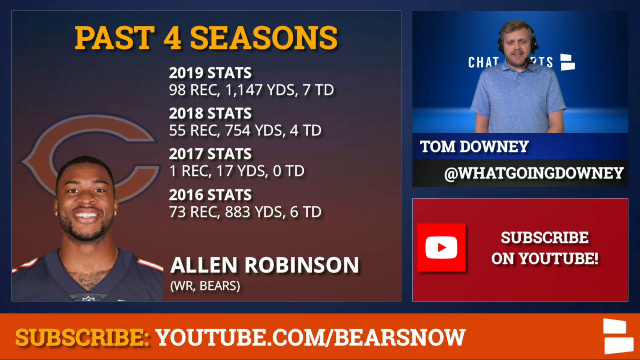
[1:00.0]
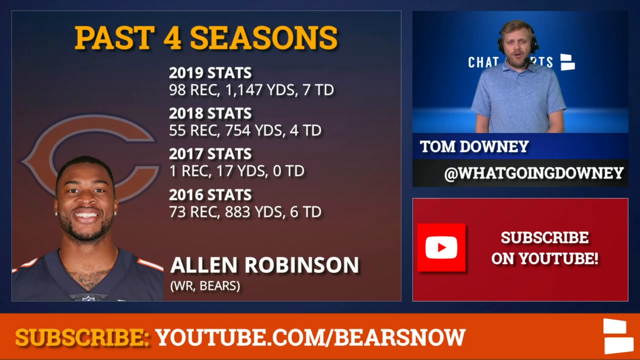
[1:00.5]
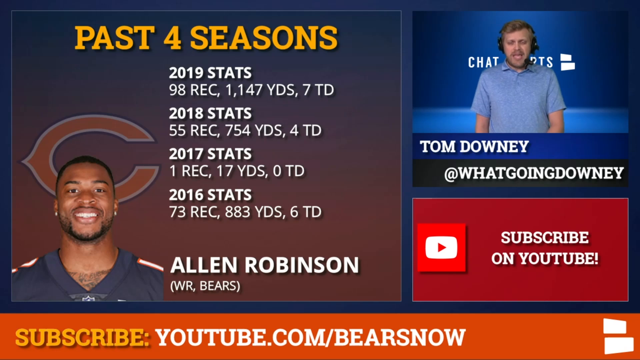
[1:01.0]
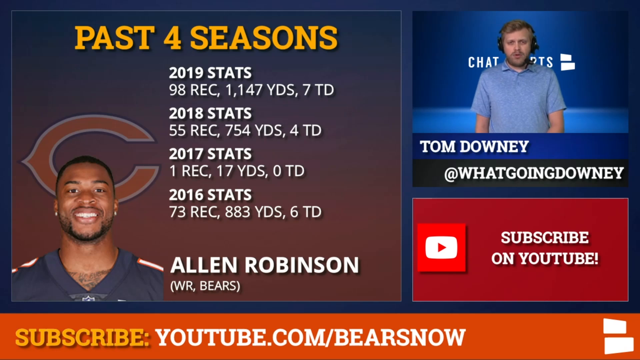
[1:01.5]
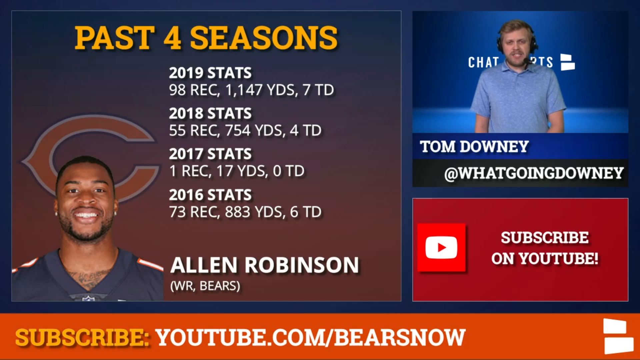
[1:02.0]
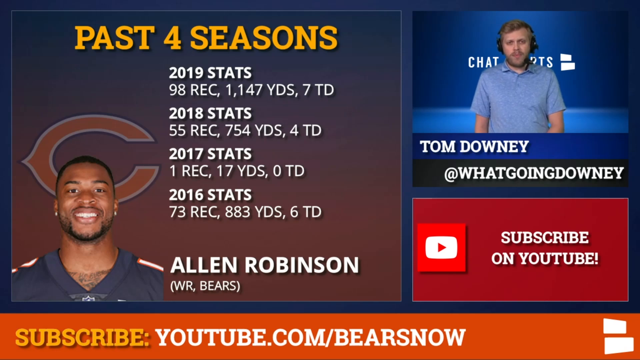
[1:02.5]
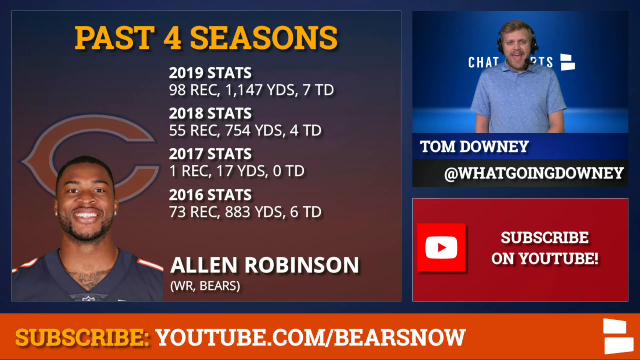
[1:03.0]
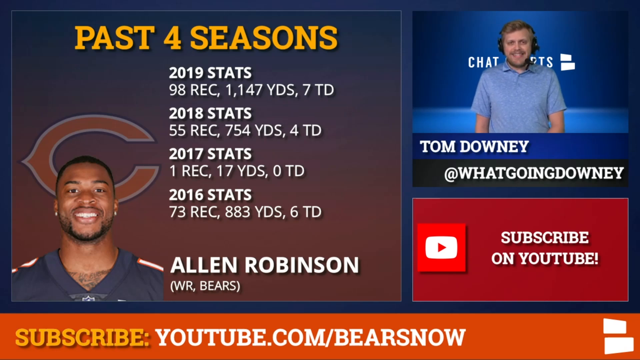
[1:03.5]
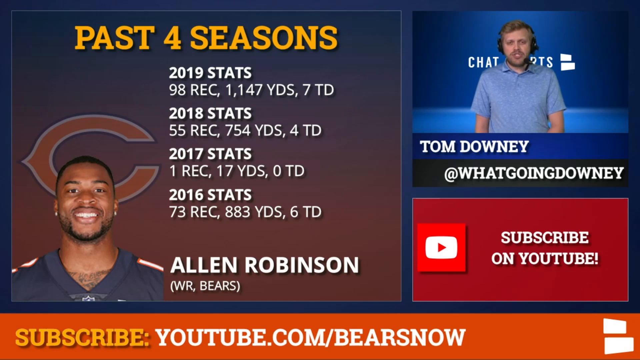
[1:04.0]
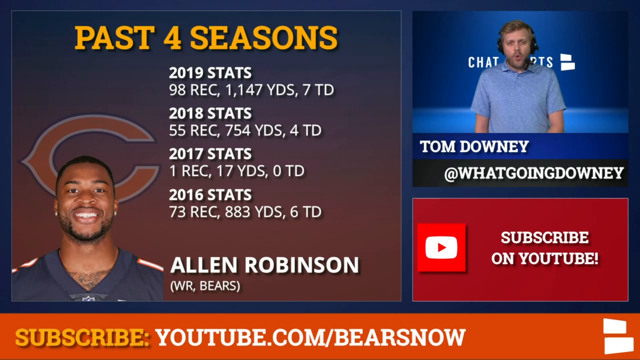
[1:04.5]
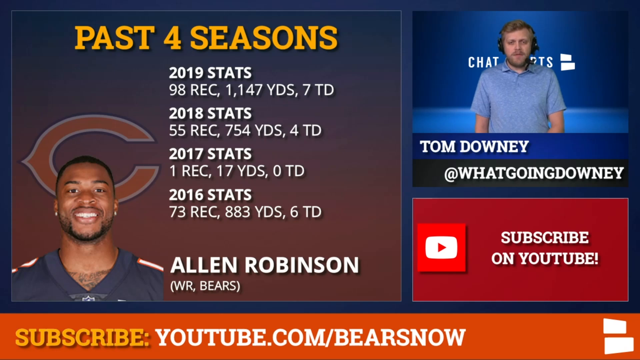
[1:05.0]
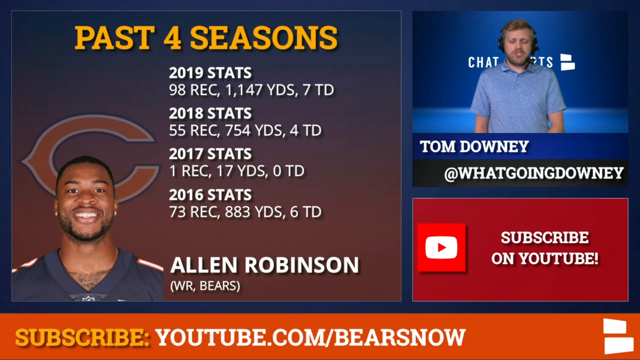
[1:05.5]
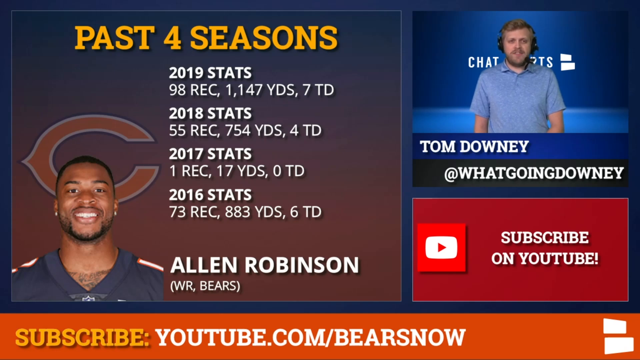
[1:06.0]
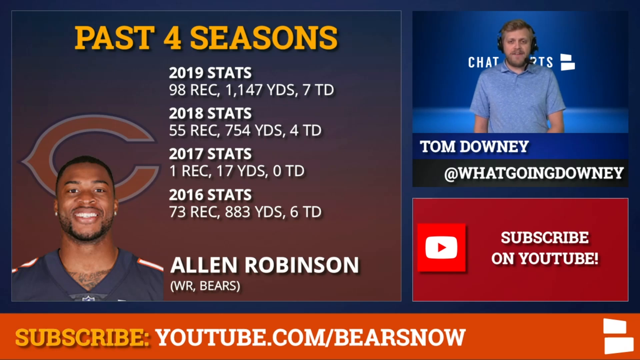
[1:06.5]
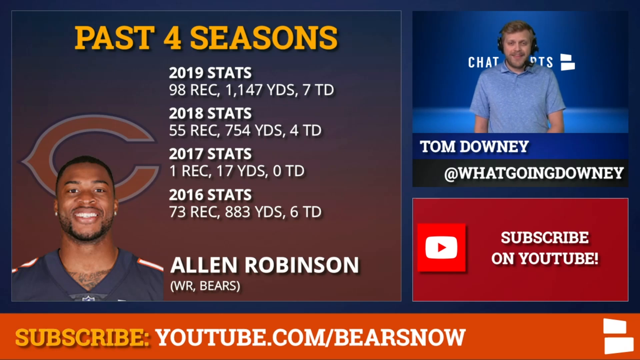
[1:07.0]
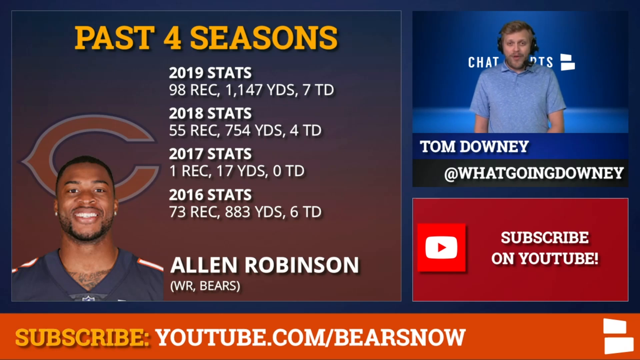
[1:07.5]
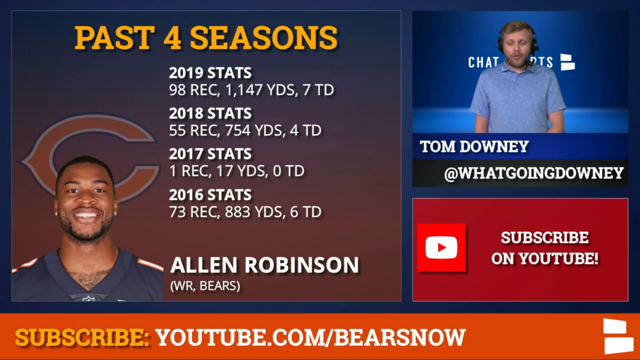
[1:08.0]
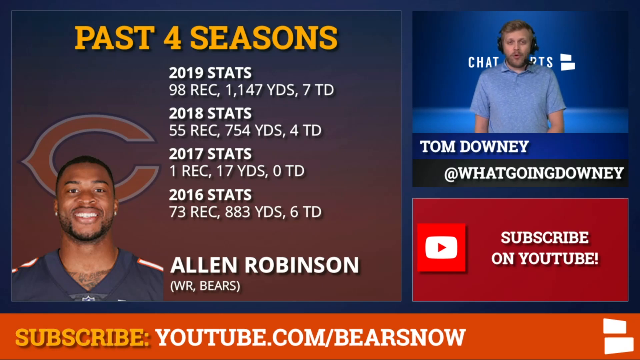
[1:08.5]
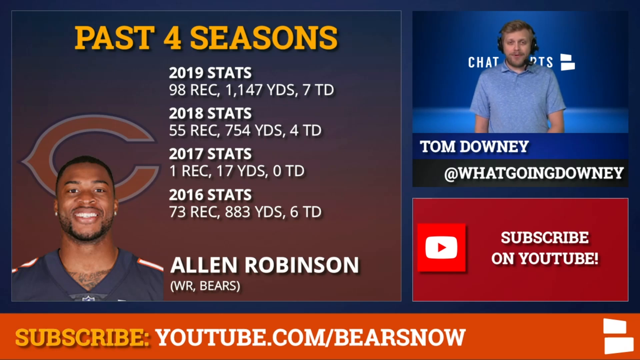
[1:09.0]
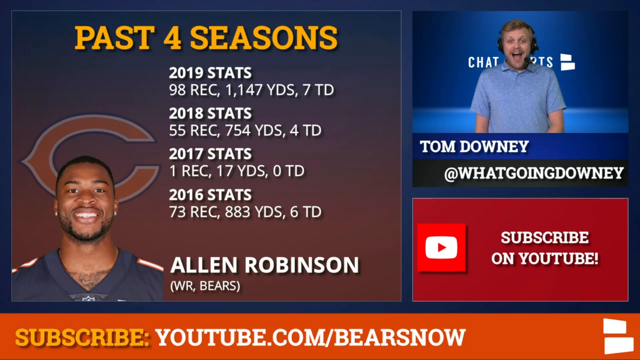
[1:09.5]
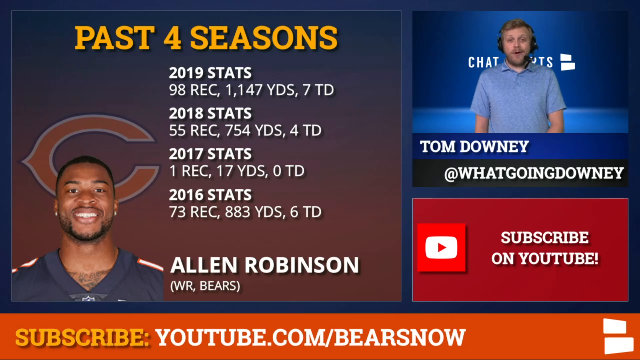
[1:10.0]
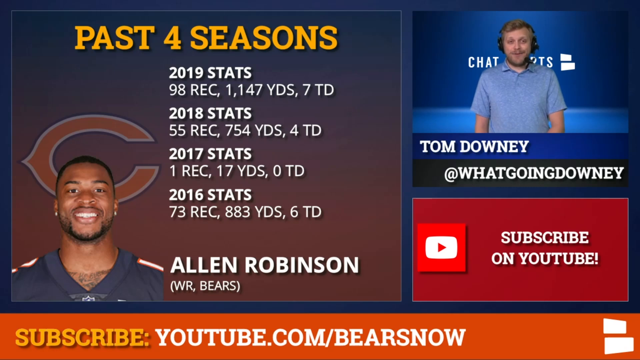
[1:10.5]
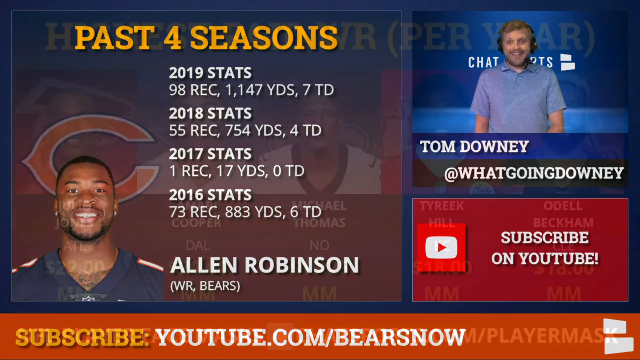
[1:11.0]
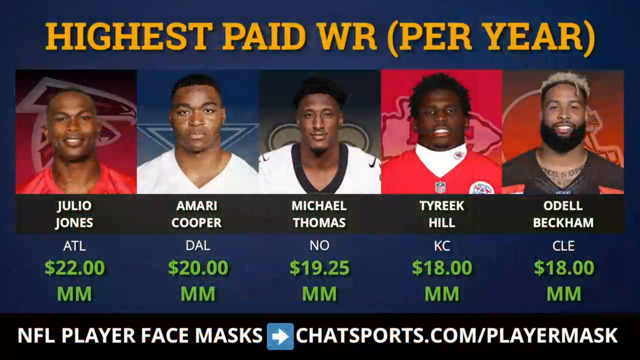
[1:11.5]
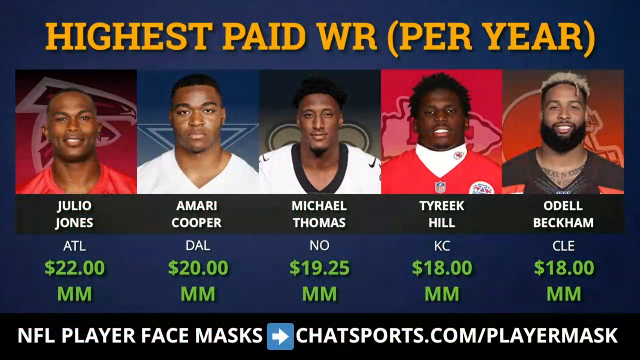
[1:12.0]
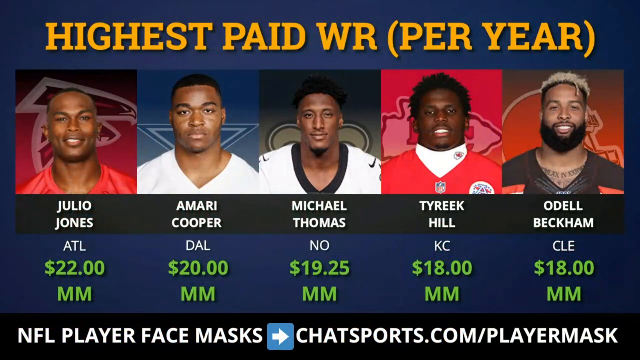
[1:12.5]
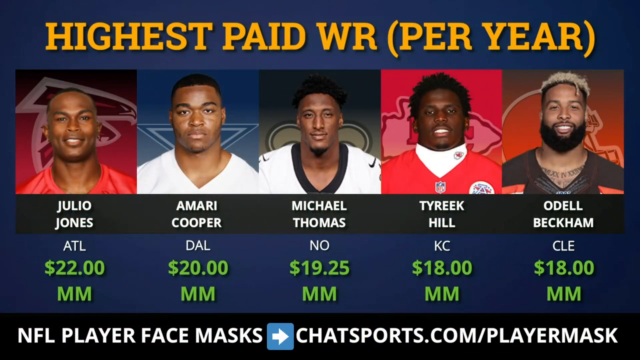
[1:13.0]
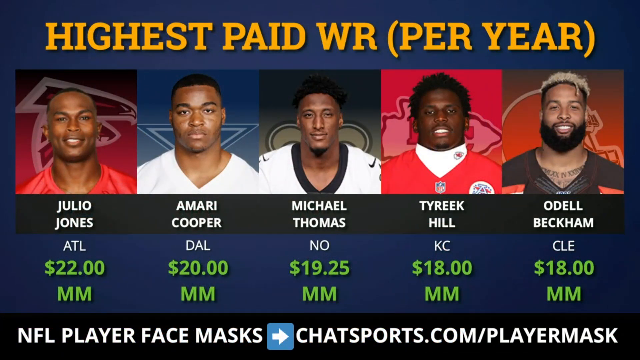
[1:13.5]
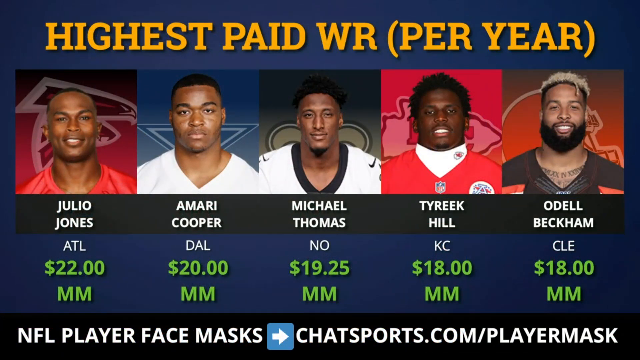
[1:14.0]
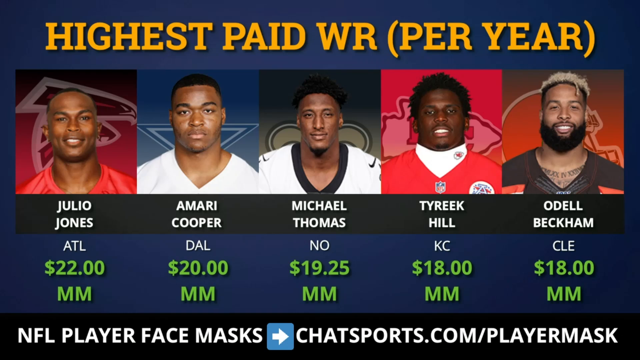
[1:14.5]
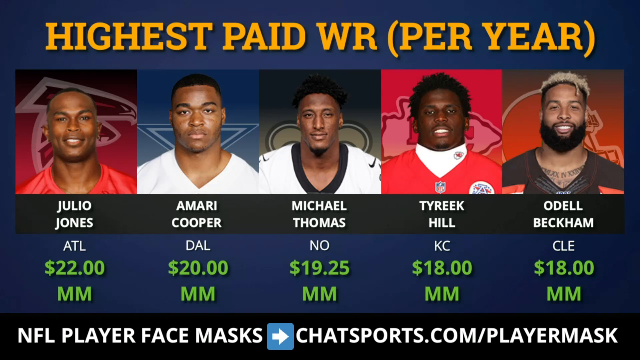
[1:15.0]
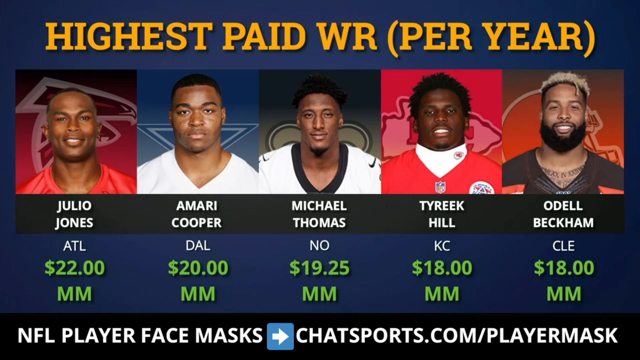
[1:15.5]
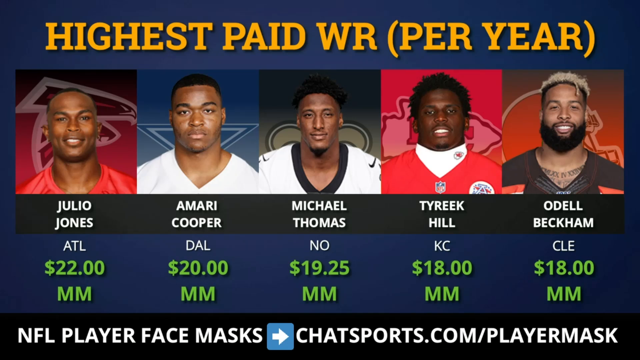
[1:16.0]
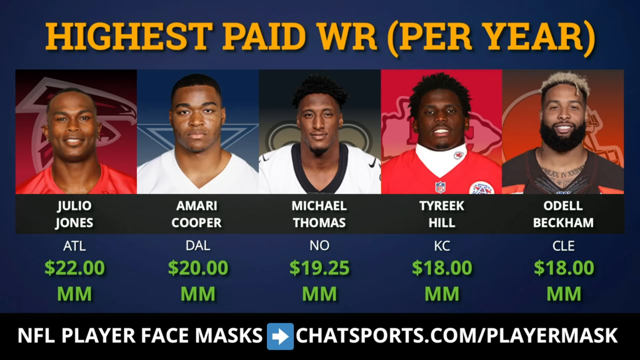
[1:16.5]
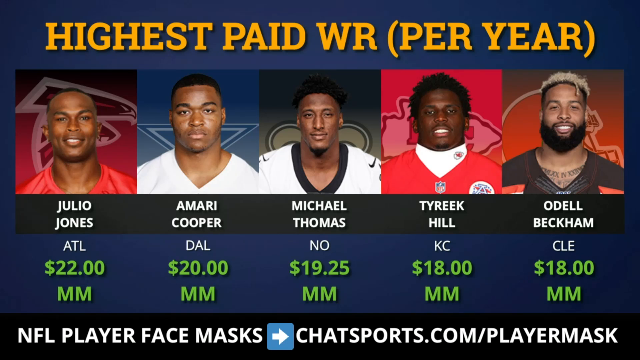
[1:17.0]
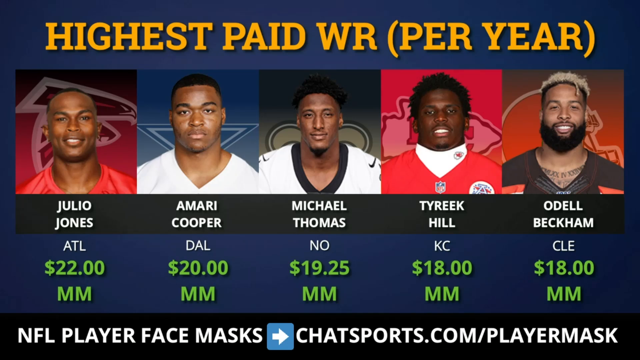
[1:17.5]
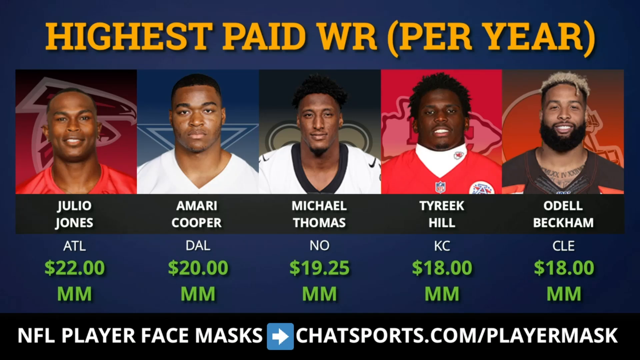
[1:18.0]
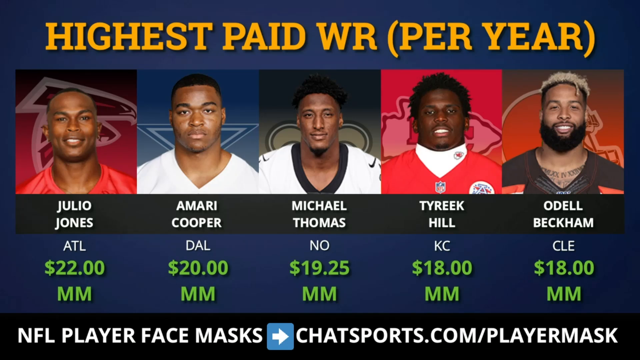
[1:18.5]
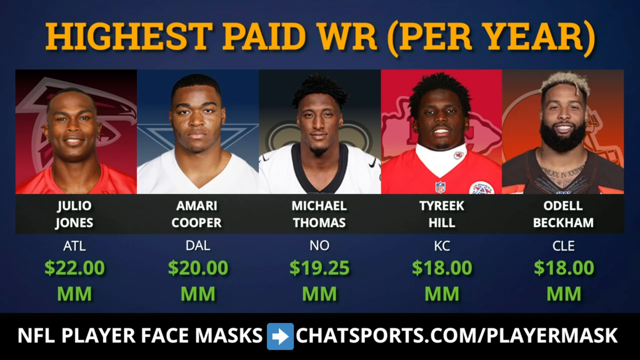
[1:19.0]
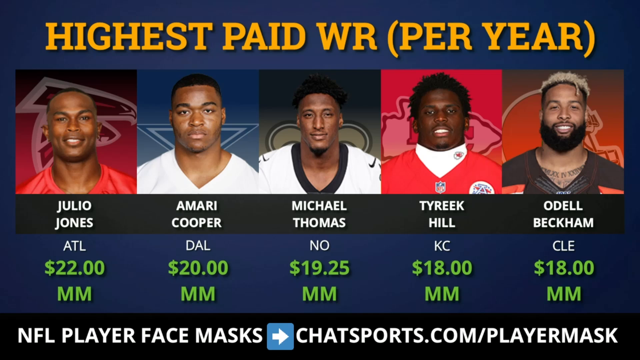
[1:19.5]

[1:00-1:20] A page shows a picture of Chicago Bears NFL player Allen Robinson with his stats for "the past four seasons". Tom Downey, whose show is called At What Going Downey, talks on a headset in his section of the screen, with a YouTube symbol and a subscribe sign beneath him. A sign along the bottom of the screen reads "Subscribe: Youtube.com/bearshow". The next page shows the "highest paid WR per year", listing a number of players horizontally with information underneath each, including how much they have made; the figures are in the millions, starting with 22. All of the players are Black, and each has a profile picture with his name underneath.